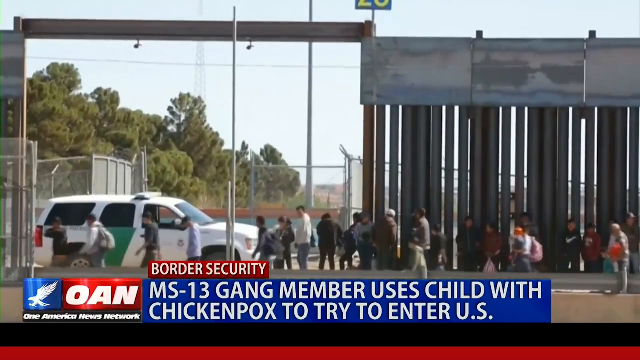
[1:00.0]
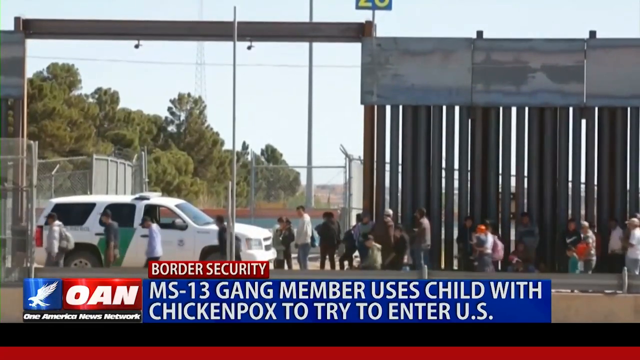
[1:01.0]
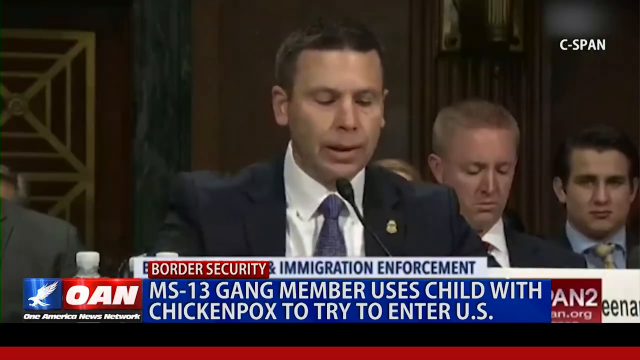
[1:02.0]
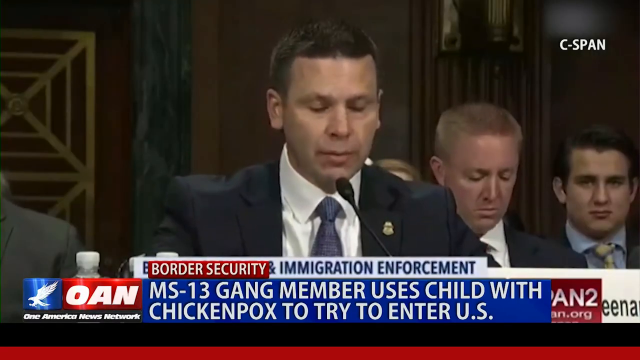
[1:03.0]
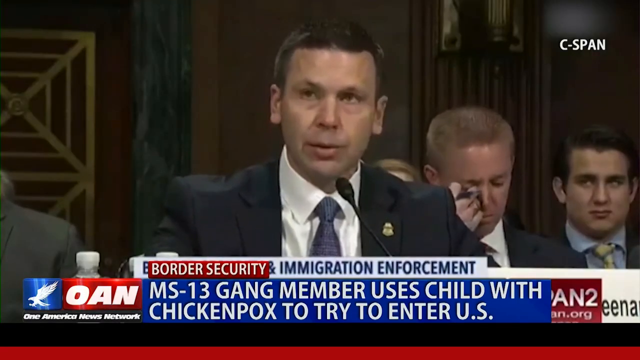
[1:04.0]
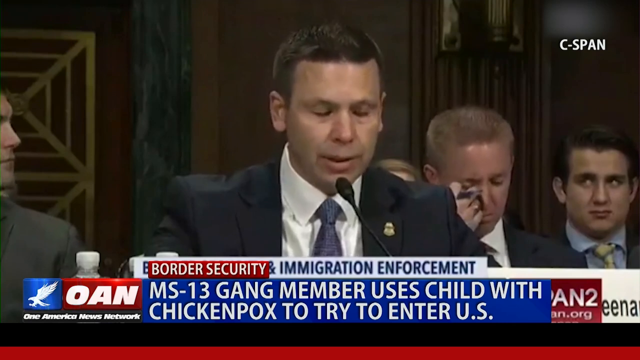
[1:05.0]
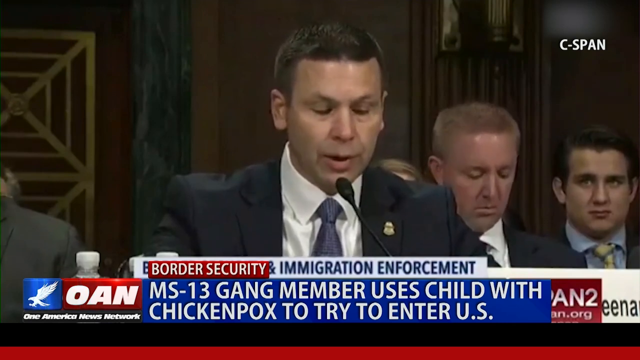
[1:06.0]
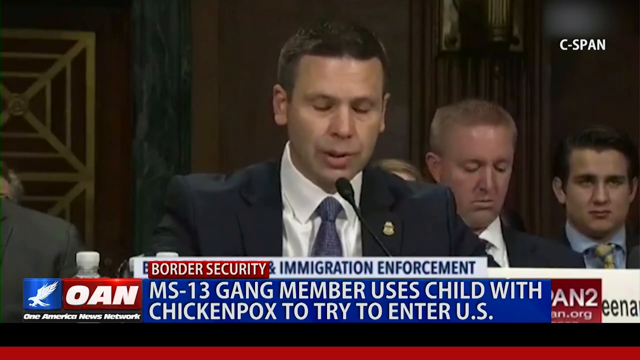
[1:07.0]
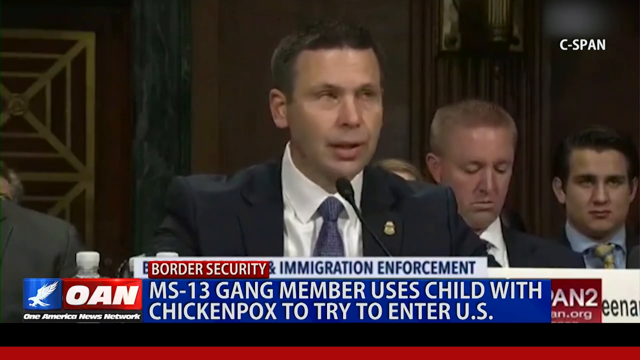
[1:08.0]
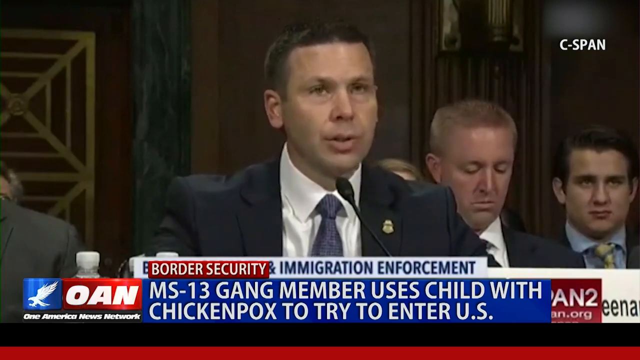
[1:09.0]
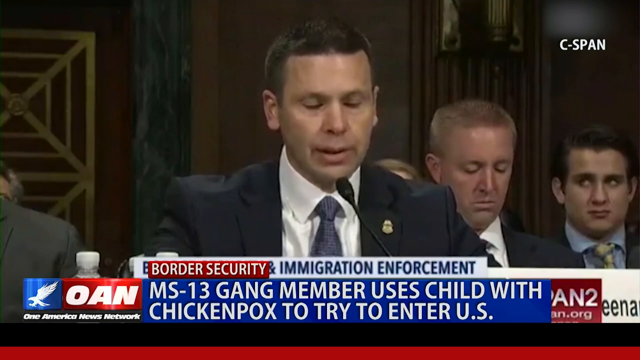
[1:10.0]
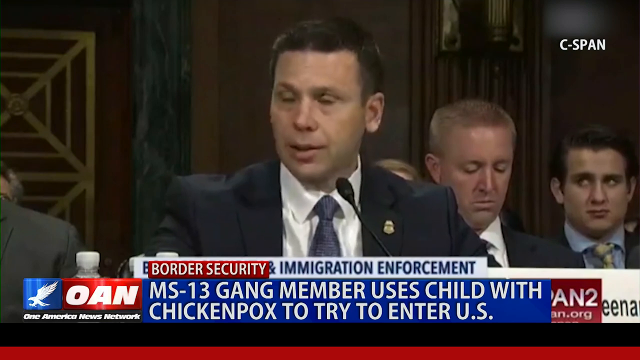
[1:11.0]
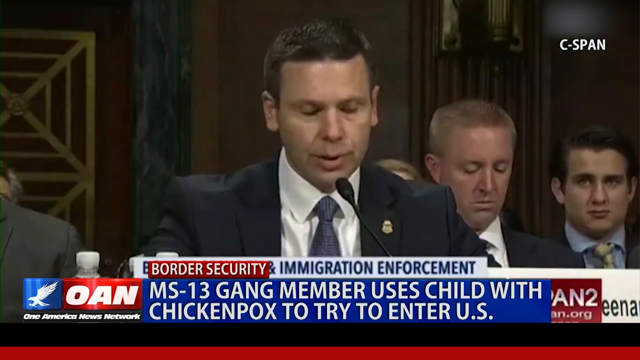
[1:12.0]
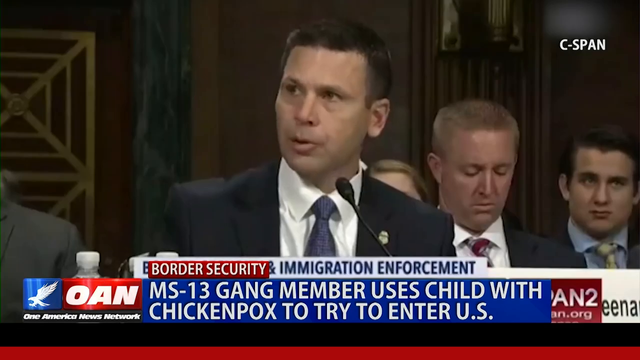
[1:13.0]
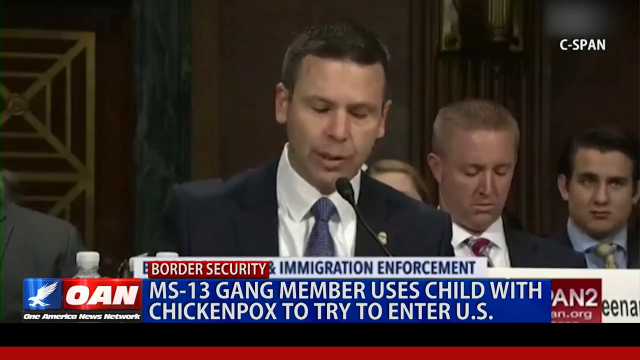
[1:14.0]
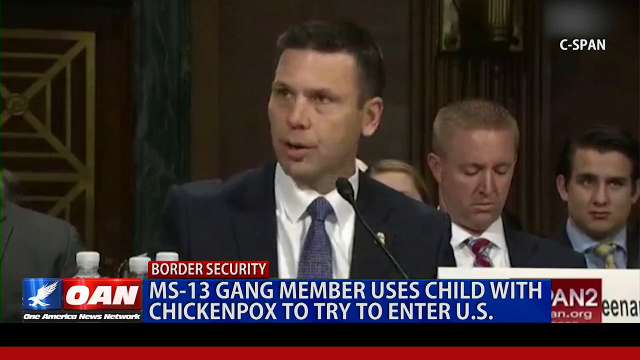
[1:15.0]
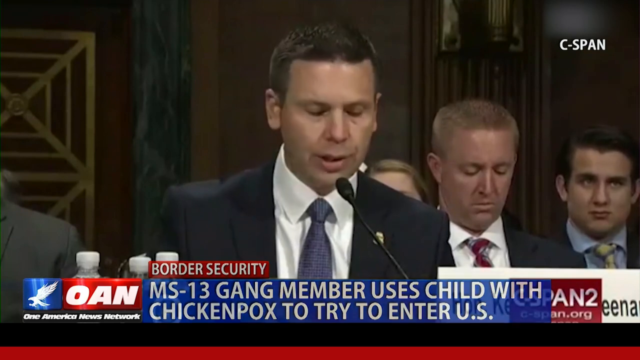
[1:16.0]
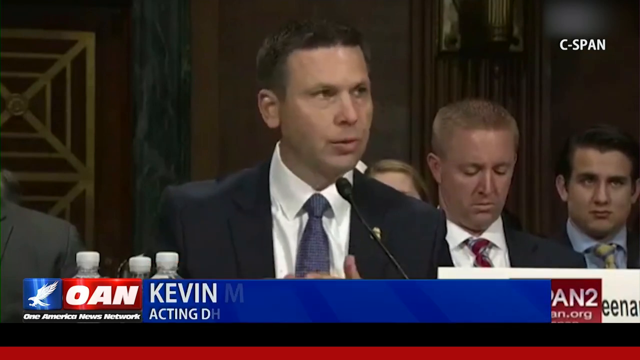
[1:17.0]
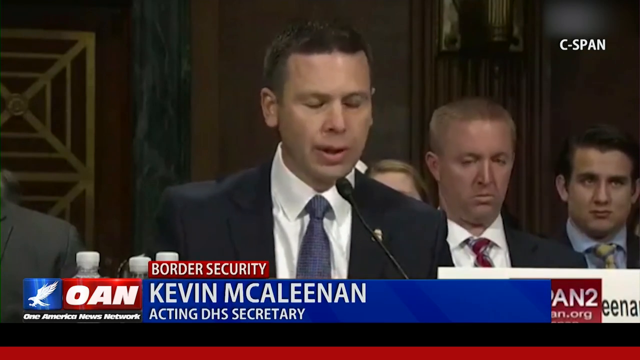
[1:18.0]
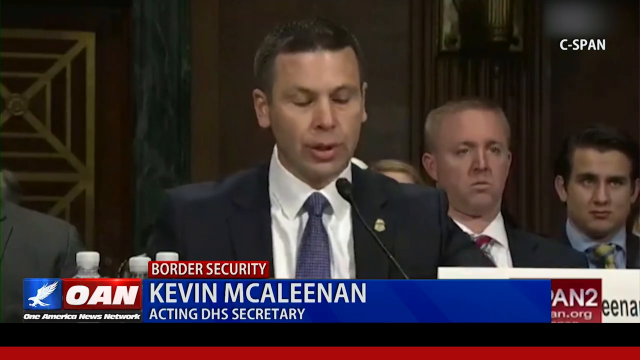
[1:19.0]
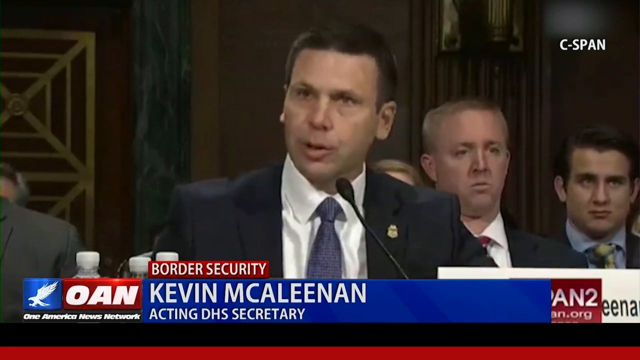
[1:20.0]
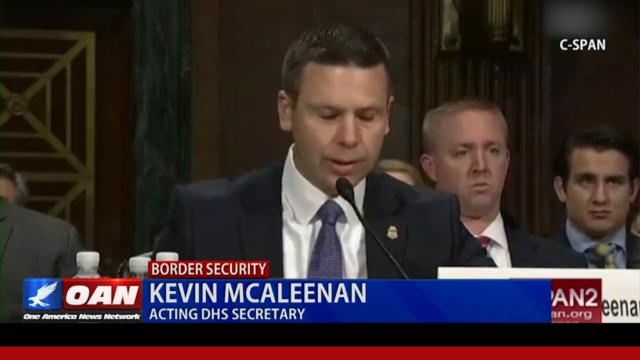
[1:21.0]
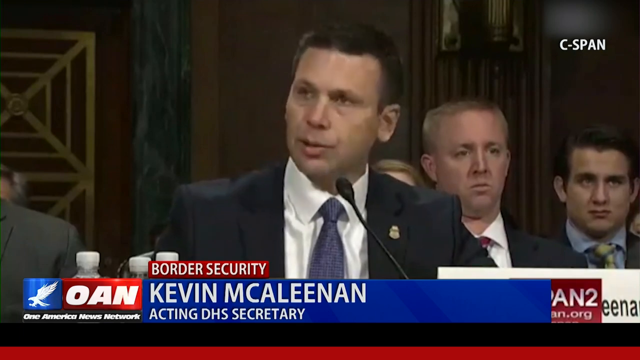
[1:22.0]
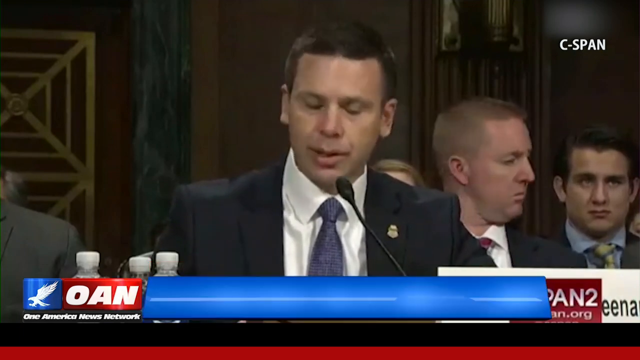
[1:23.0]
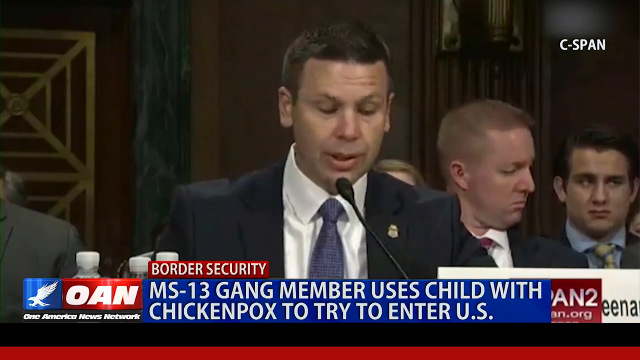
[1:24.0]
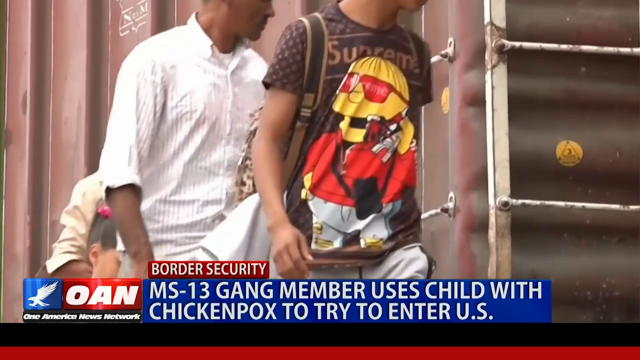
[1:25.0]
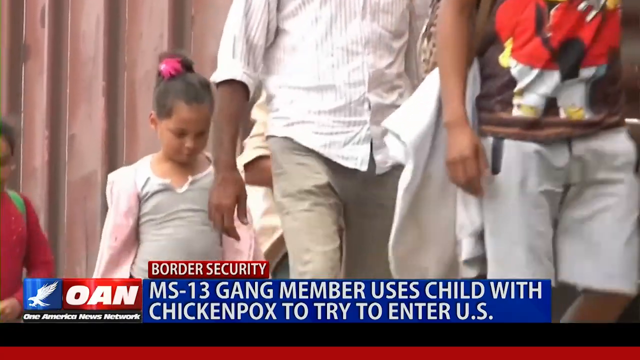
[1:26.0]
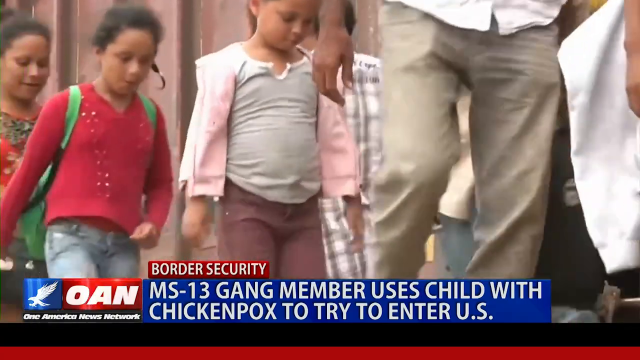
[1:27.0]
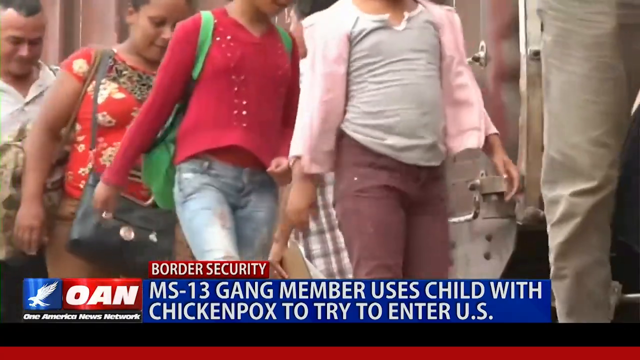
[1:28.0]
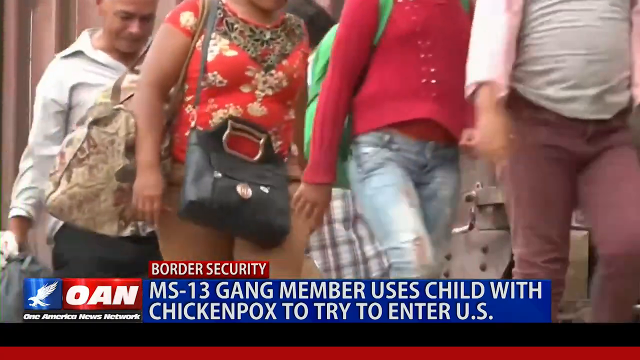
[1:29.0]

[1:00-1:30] After the border, a man, probably in Congress, talks into a little mic as he addresses someone. He has brown hair and wears a black suit, a gray tie and a white shirt. "C-SPAN" appears in white in the upper right-hand corner, and "OAN" and "border security" remain along the bottom. The video shows the border again, where a family walks along the border; the people have neat, clean clothes and neat, clean hair, looking freshly showered.